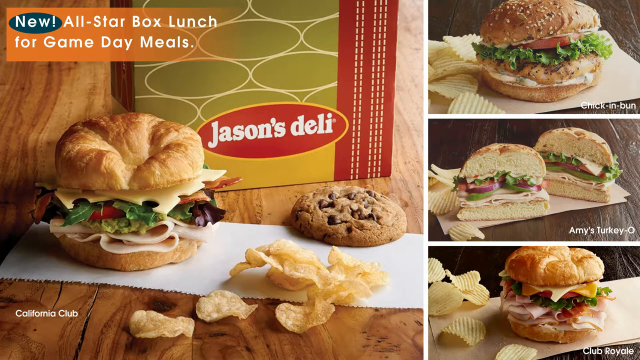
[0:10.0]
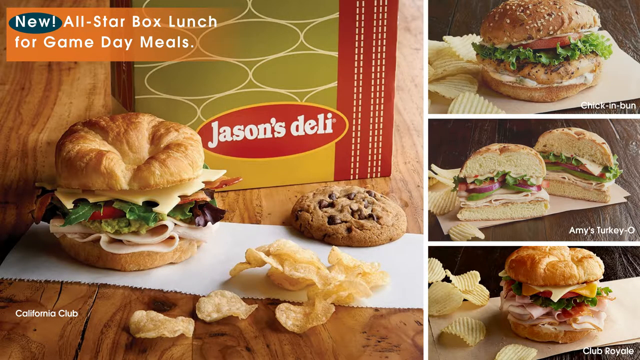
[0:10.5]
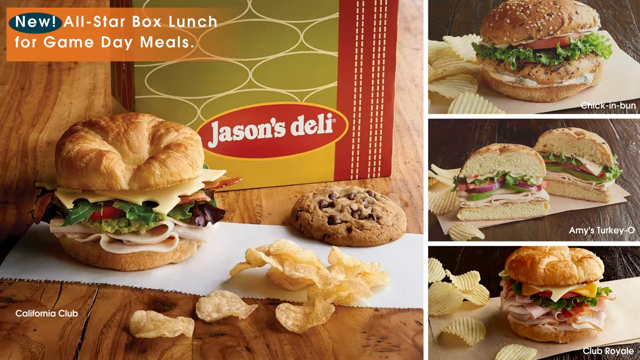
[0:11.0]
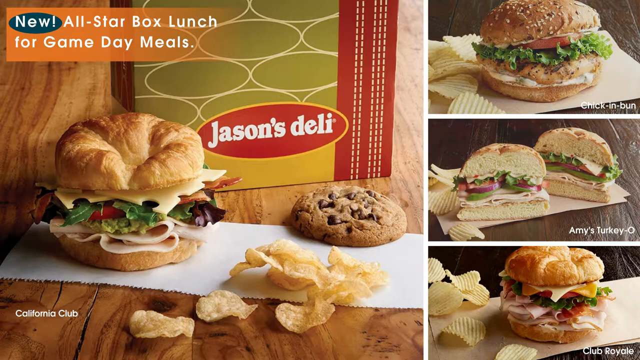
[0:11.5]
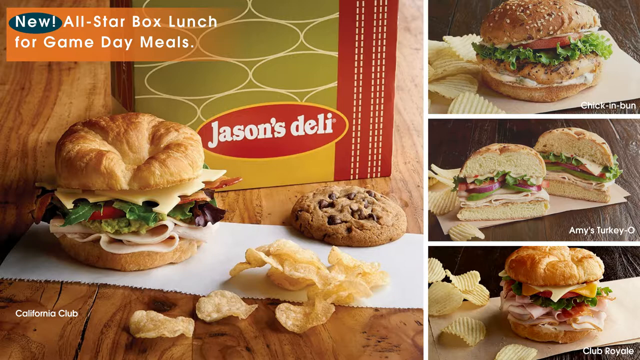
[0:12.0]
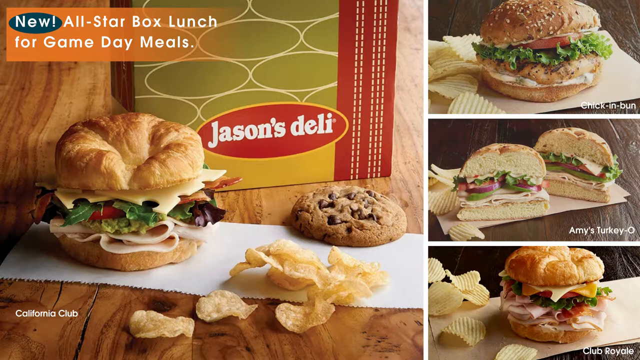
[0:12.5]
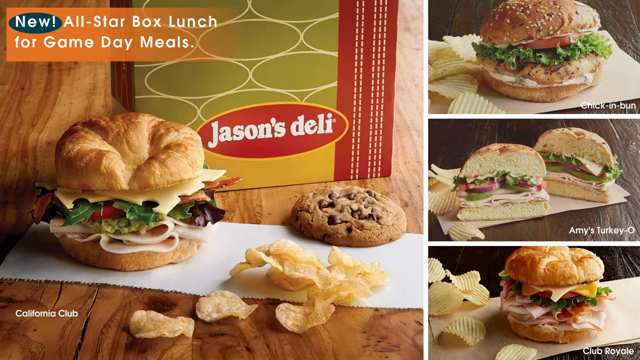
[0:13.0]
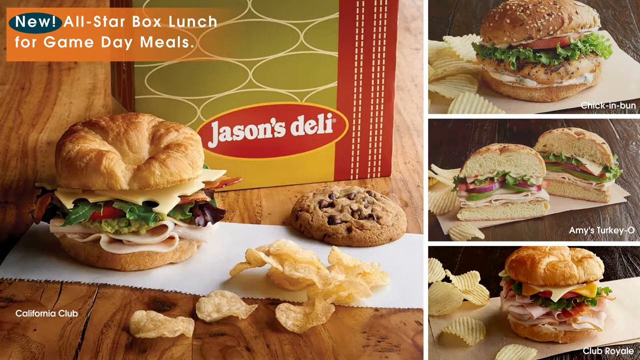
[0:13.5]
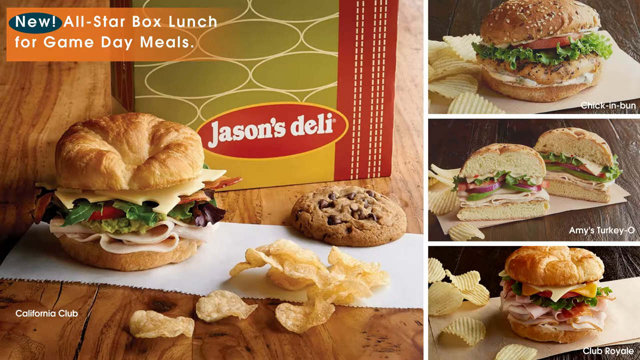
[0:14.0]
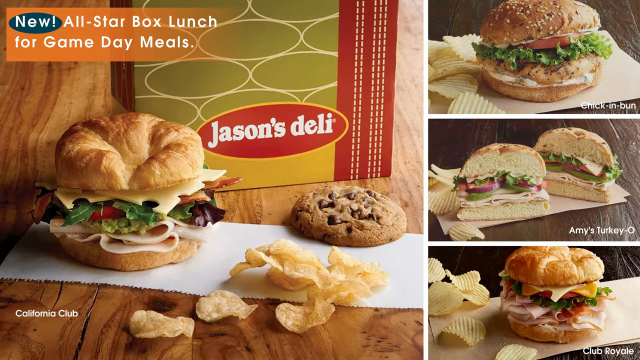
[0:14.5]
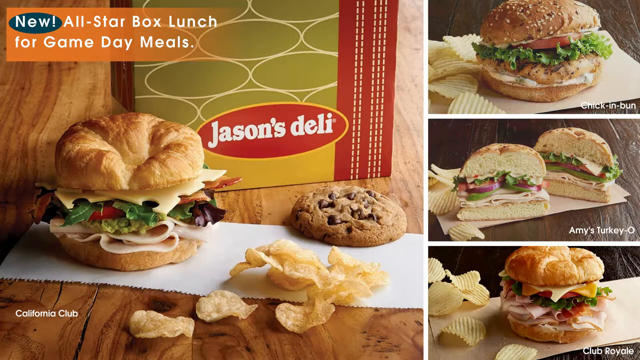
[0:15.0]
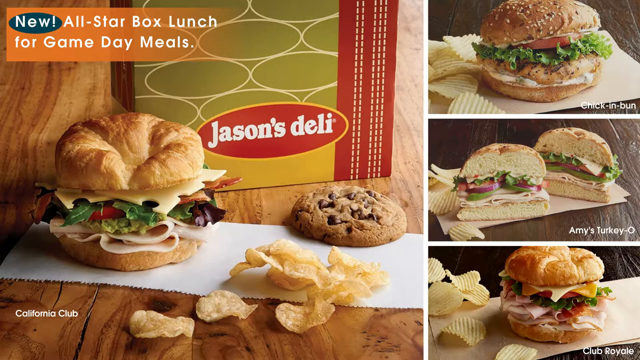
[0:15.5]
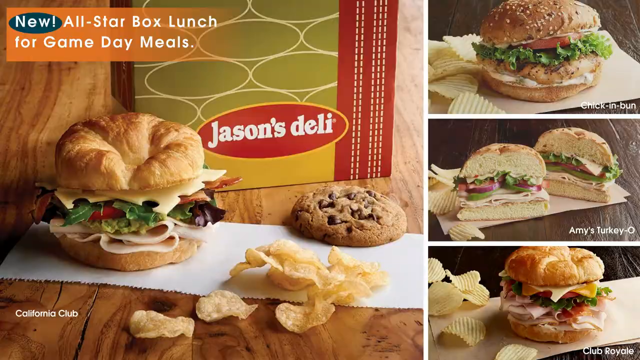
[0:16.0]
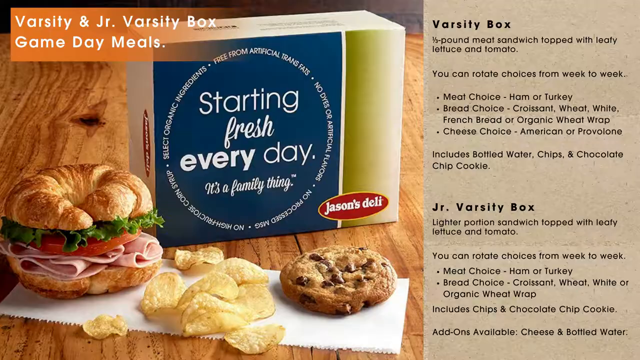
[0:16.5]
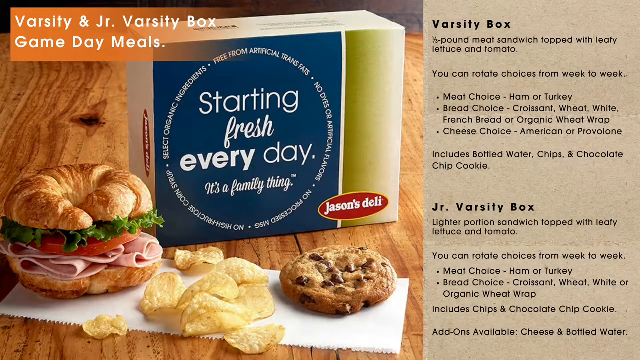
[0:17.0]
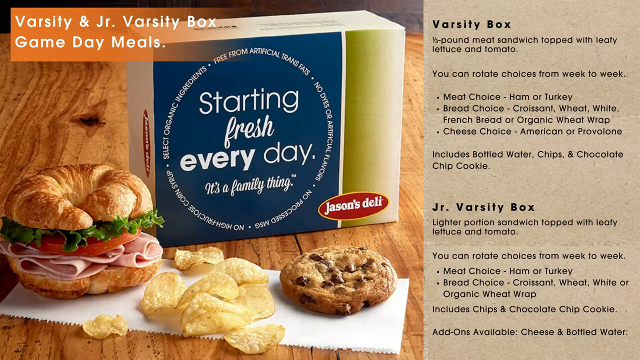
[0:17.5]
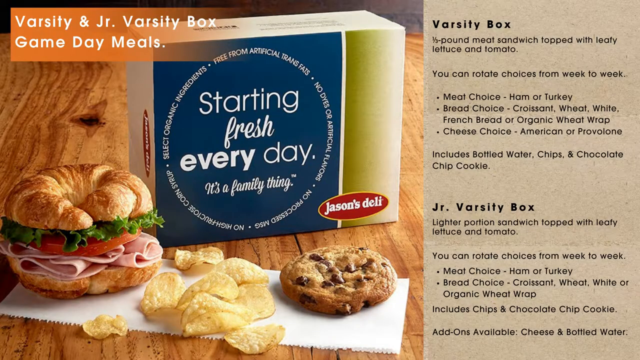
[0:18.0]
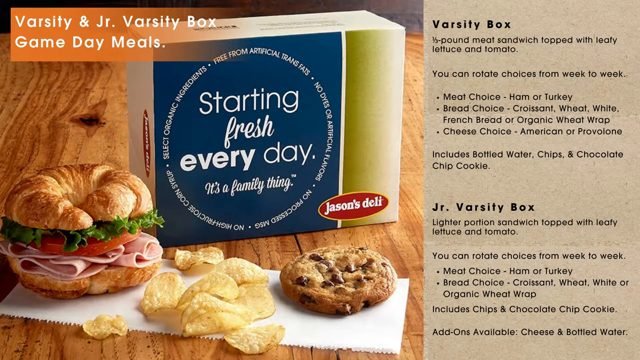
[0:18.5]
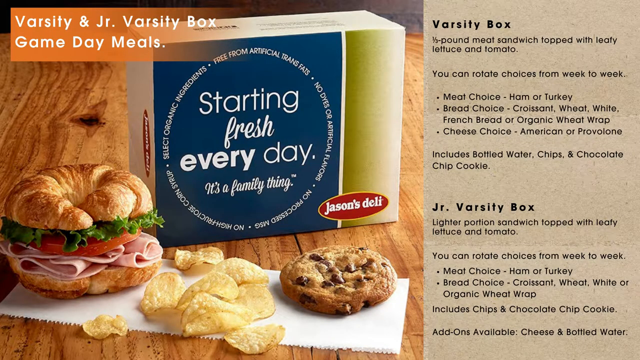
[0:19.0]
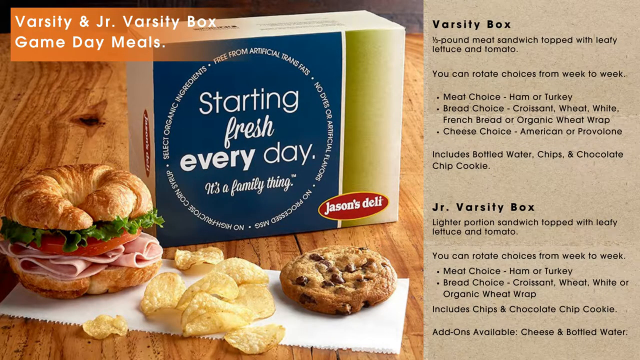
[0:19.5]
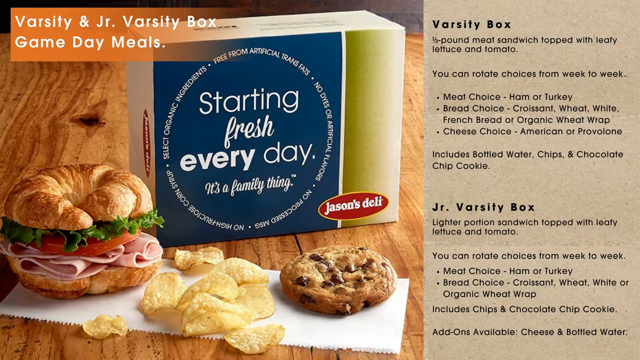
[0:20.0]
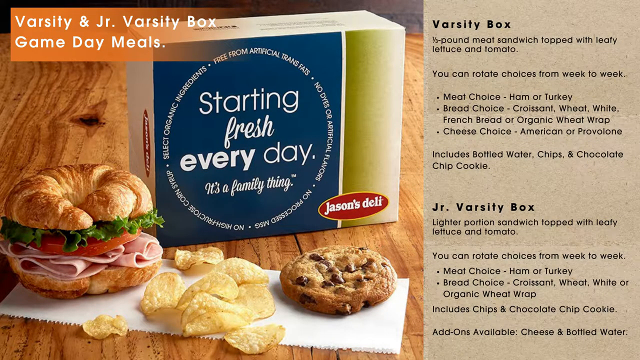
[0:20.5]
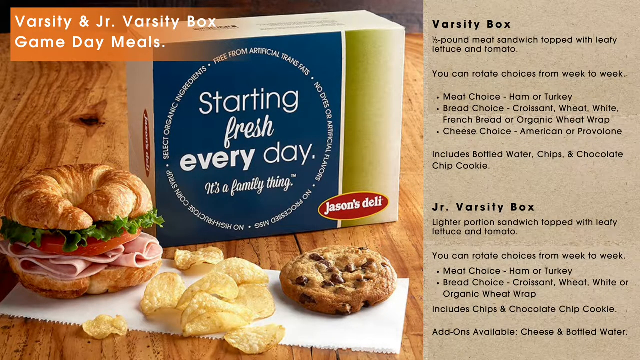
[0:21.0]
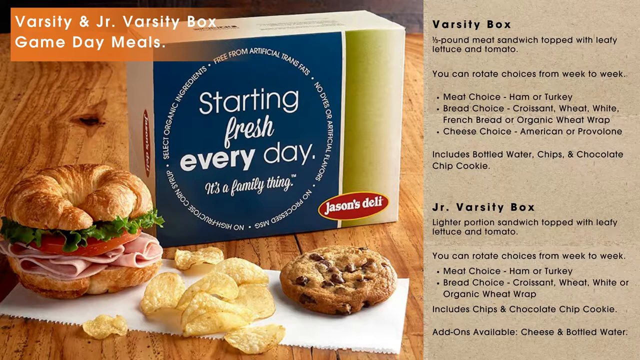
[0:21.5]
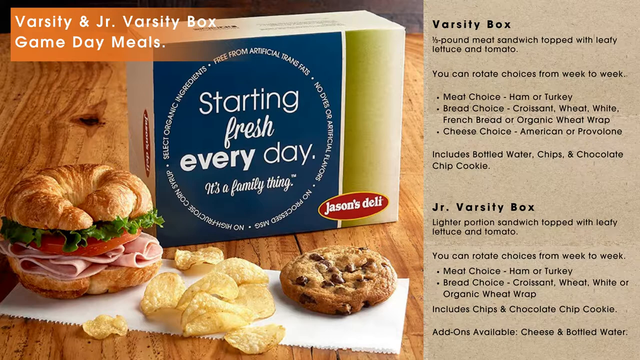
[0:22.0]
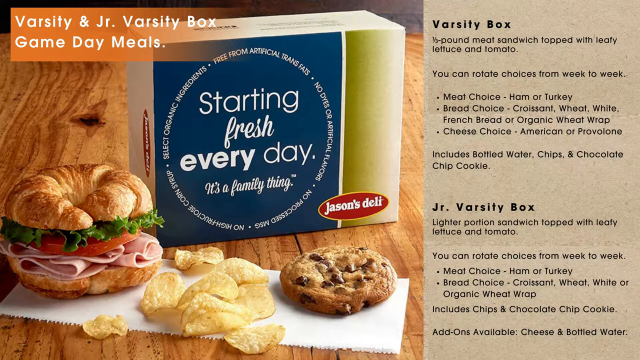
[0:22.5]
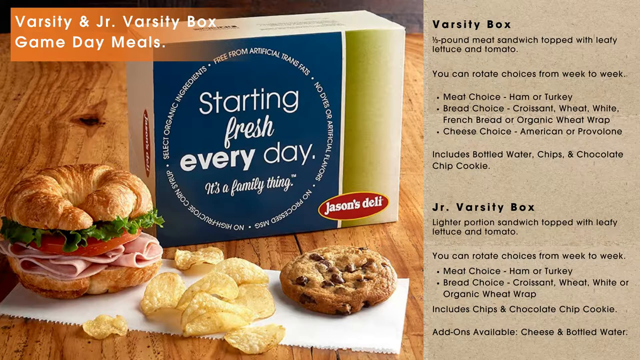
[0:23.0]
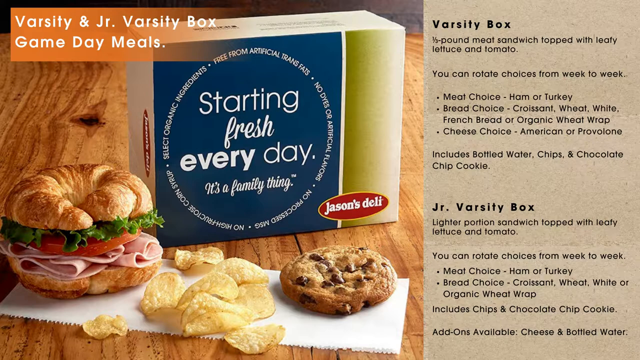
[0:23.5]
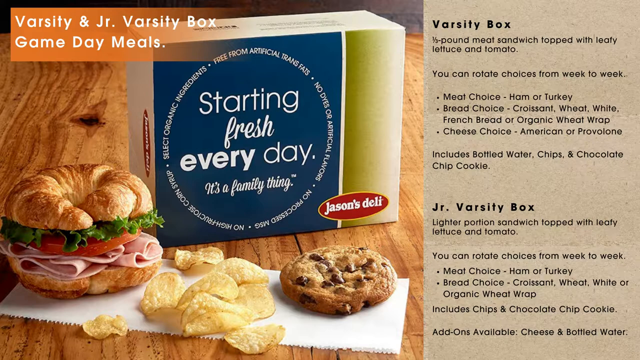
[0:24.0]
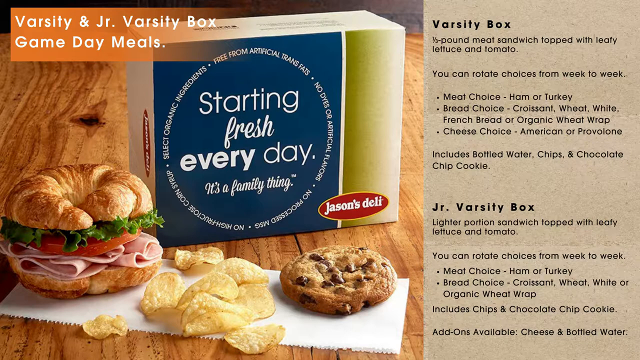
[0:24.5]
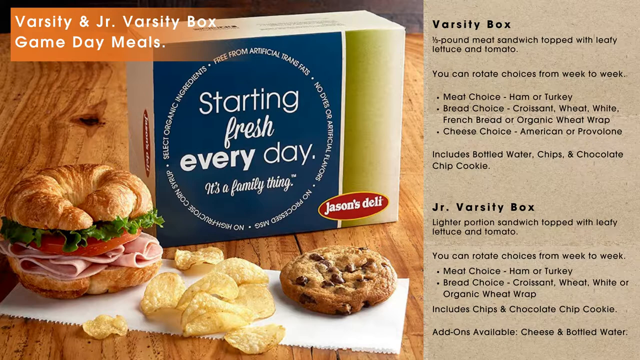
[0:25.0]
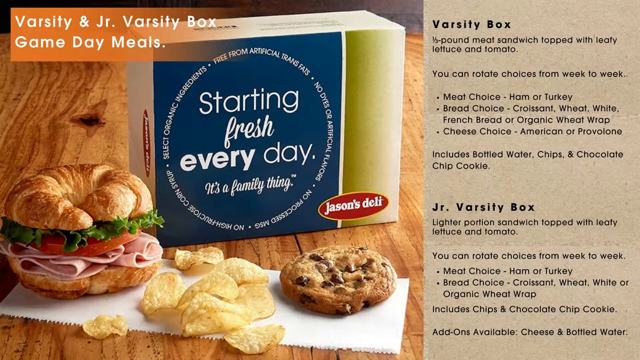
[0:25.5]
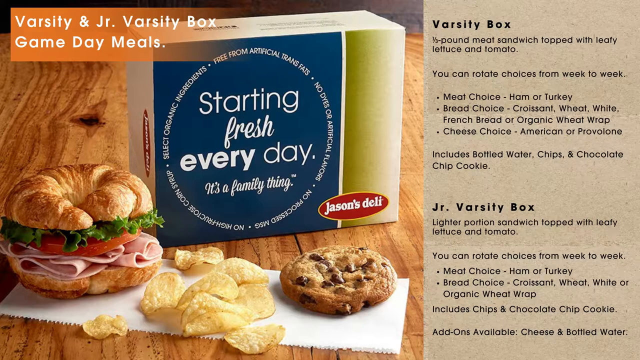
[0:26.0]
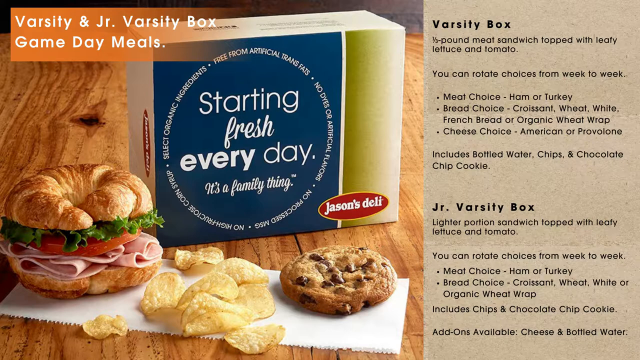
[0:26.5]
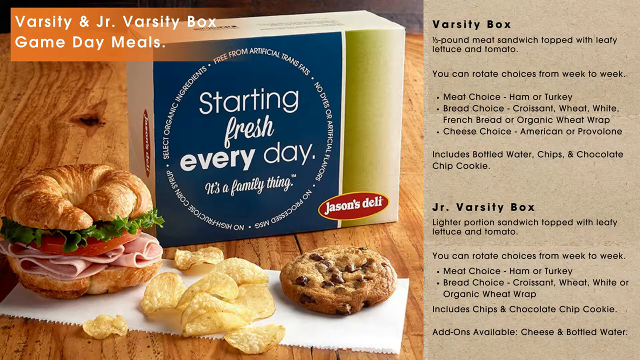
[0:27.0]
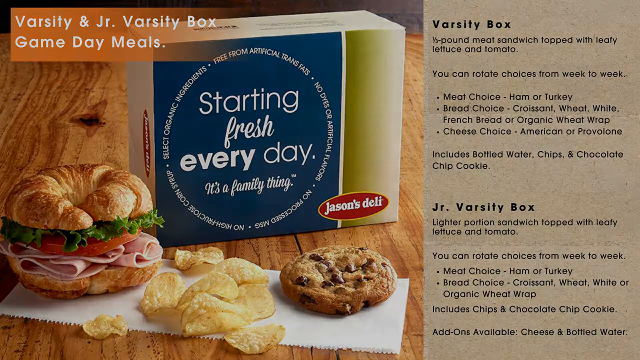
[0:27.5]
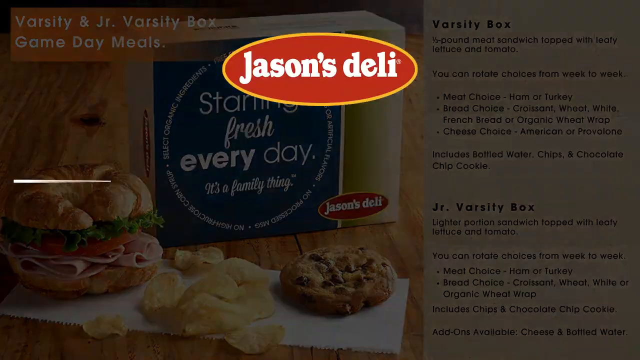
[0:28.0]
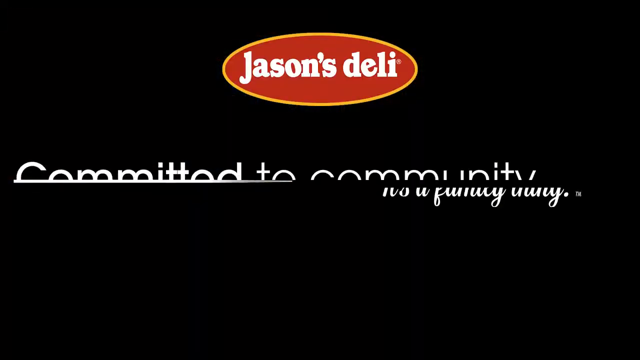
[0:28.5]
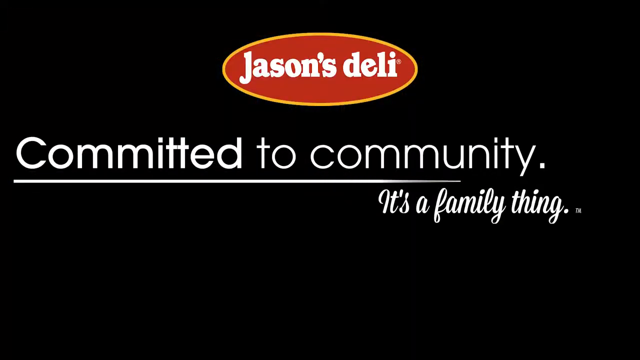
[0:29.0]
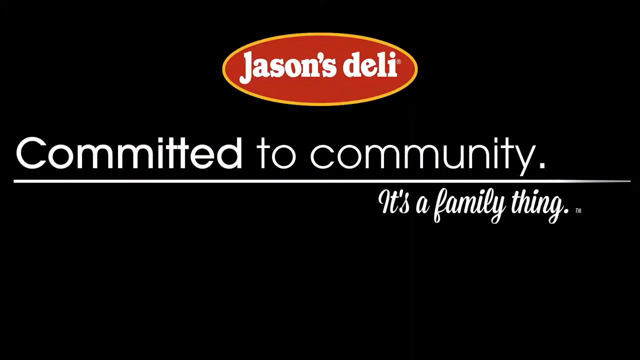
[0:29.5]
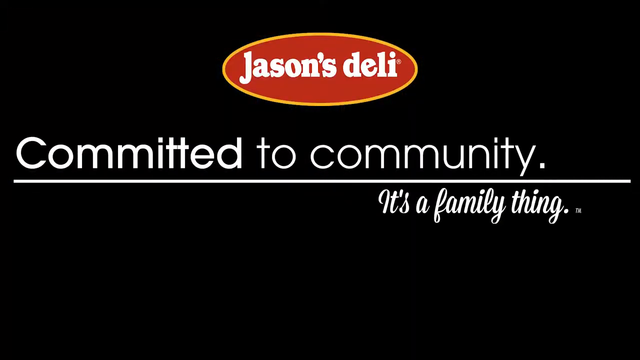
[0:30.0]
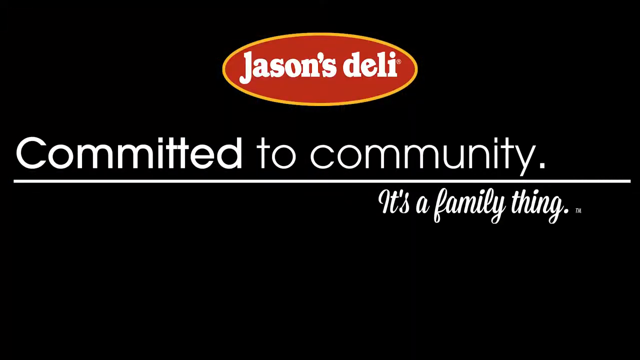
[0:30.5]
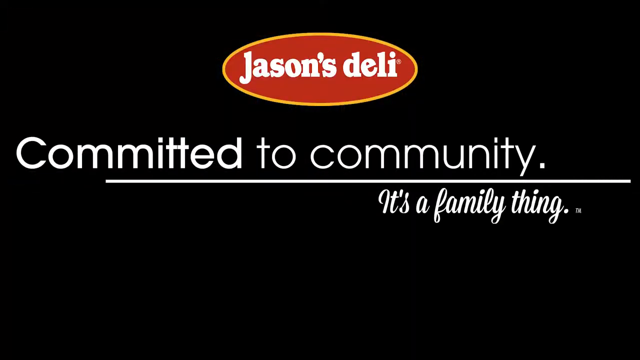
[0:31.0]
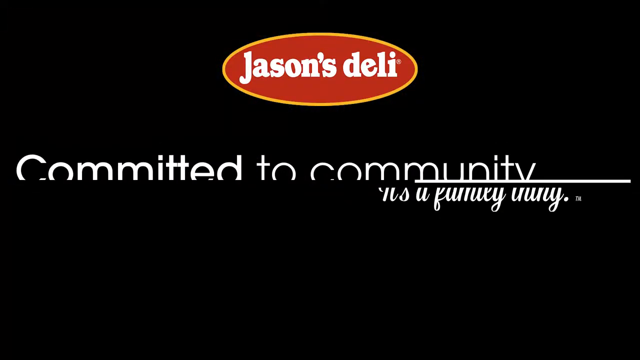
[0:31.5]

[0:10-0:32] The Jason's Deli video continues with the new all-star box lunch for game day meals. The California Club croissant is on screen, with turkey slices, lettuce leaves and salad on a croissant, along with a cookie and some crisps. On the right side is the chicken bun, a chicken salad bun with crisps, then the Amy's Turkey O with a white bun with chicken and salad with crisps, and another picture of the California Club at the bottom. The page changes to the varsity and junior varsity box game day meals. In the centre is a Jason's Deli box with a blue main background on the front and a circle reading "select organic ingredients free from artificial trans fats, no dyes or artificial flavours, no processed MSG, no high fructose corn syrup". Inside this circle of letters is "starting fresh every day it's a family thing", with the Jason's Deli logo on the bottom right of the box and an olive green section shaded to white on the right-hand side. In front of the box is a sliced ham and salad croissant with crisps and a chocolate chip cookie on a wooden table. On the right of the screen are the details of the varsity box, which read "half a pound of meat sandwich topped with leafy lettuce and tomato. You can rotate choices from week to week meat choice ham or turkey bread choice croissant wheat white french bread or organic wheat wrap cheese choice american or provolone includes bottled water chips and chocolate chip cookie", followed by "junior varsity box lighter portion sandwich topped with leafy lettuce and tomato you can rotate choices from week to week meat choice ham or turkey bread choice croissant wheat white or organic wheat wrap includes chips and chocolate chip cookie add-ons available cheese and bottled water". The screen fades to a black background, and then the Jason's Deli logo appears, a red oval with a yellow outline, with the title "Committed to community, it's a family thing" underneath.